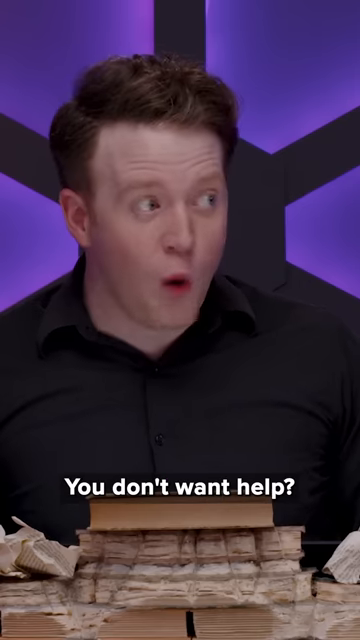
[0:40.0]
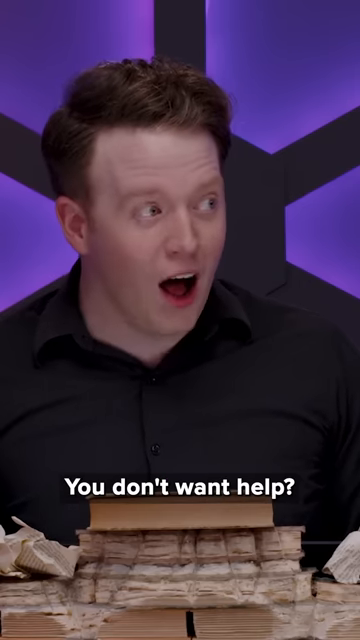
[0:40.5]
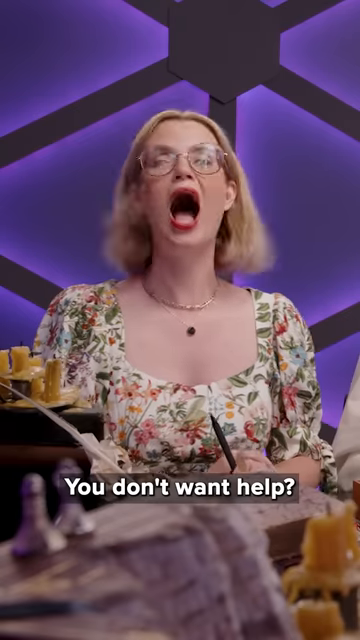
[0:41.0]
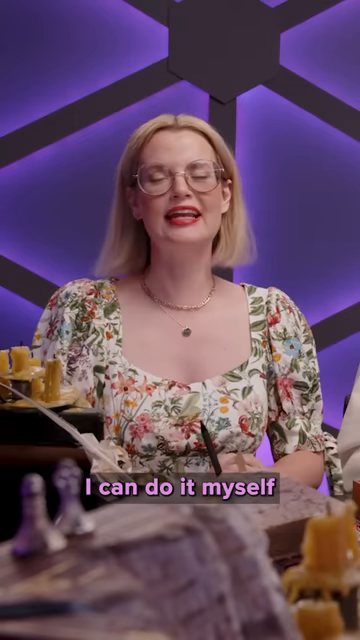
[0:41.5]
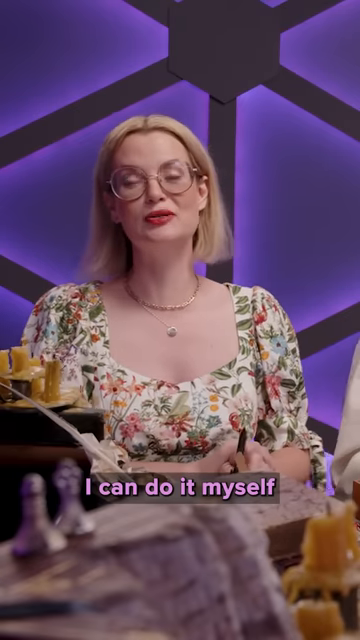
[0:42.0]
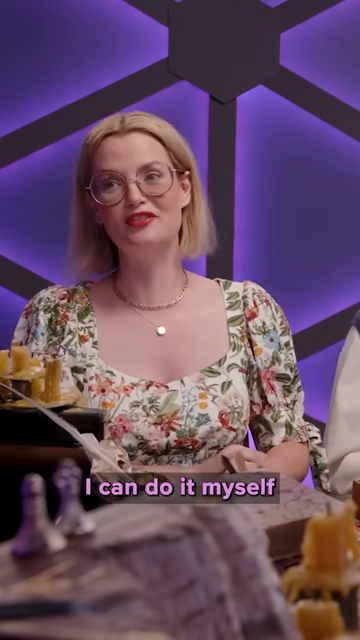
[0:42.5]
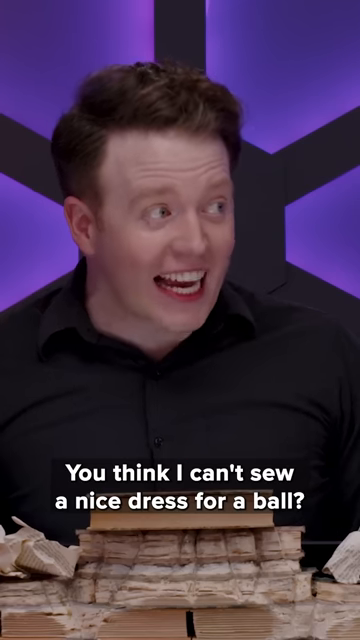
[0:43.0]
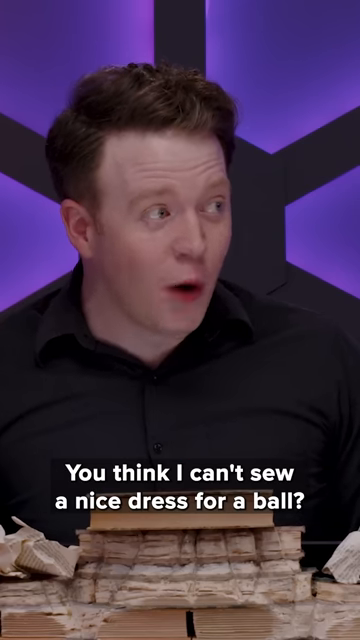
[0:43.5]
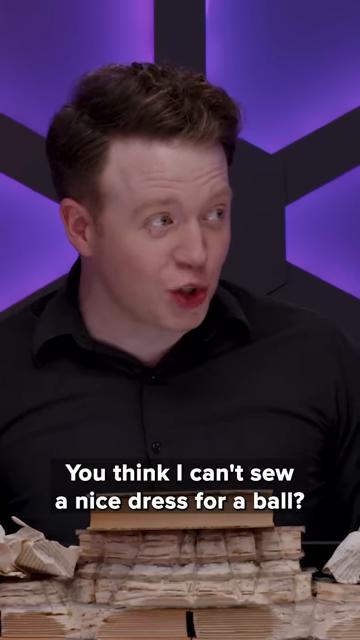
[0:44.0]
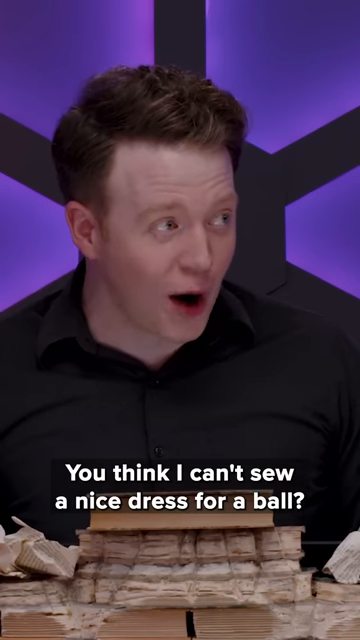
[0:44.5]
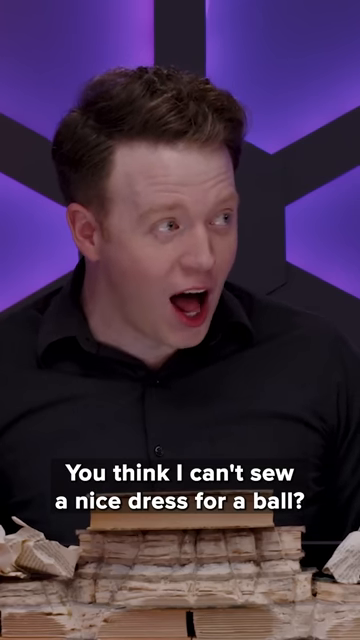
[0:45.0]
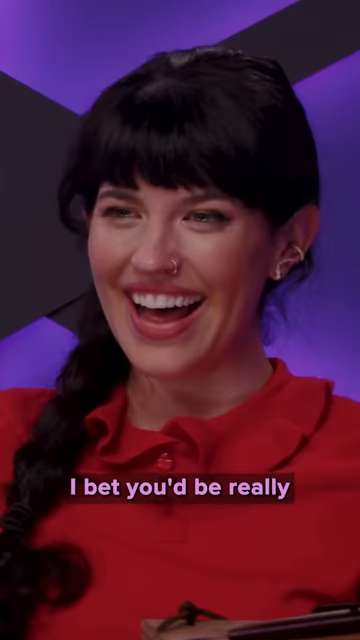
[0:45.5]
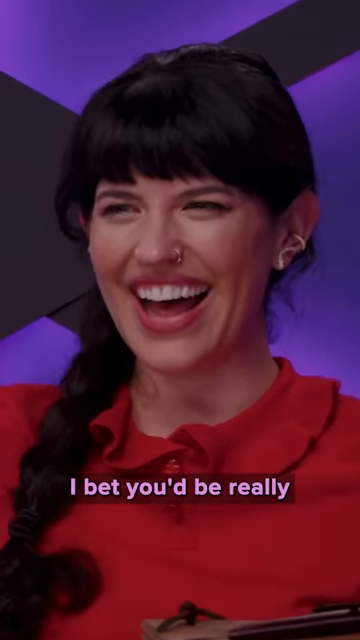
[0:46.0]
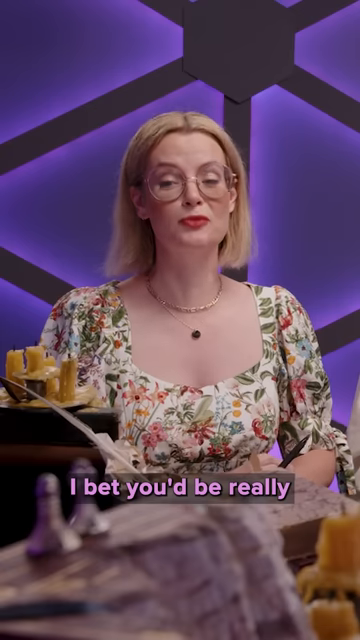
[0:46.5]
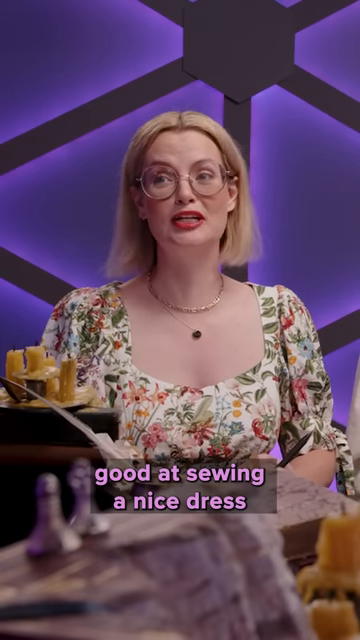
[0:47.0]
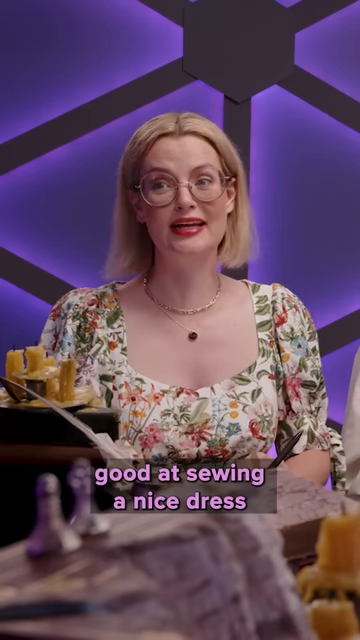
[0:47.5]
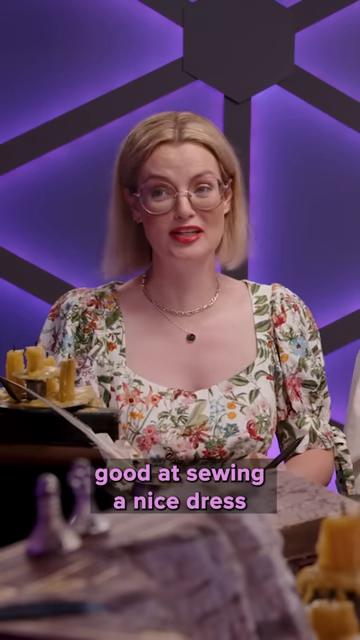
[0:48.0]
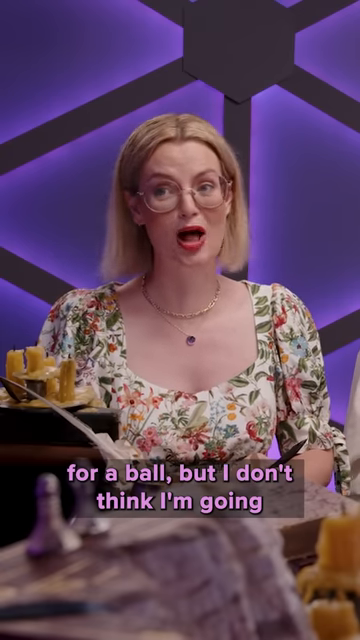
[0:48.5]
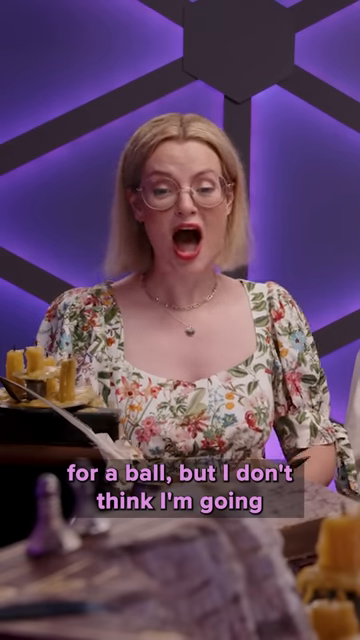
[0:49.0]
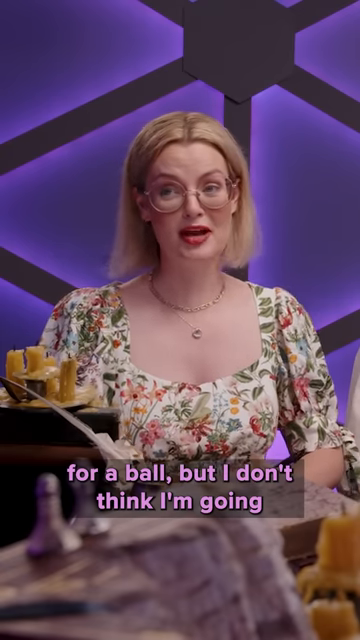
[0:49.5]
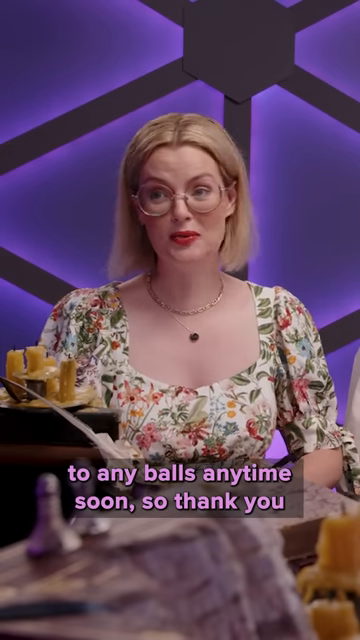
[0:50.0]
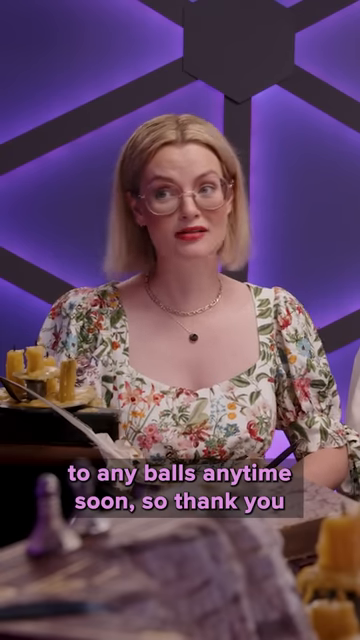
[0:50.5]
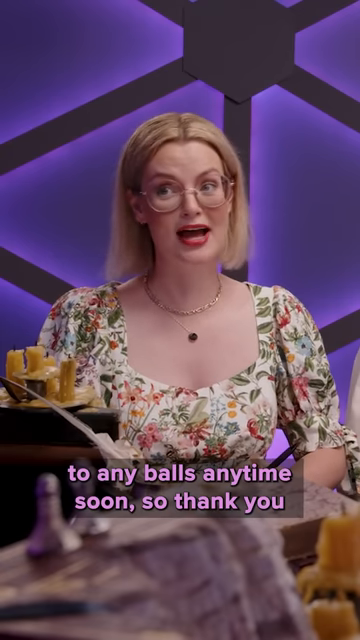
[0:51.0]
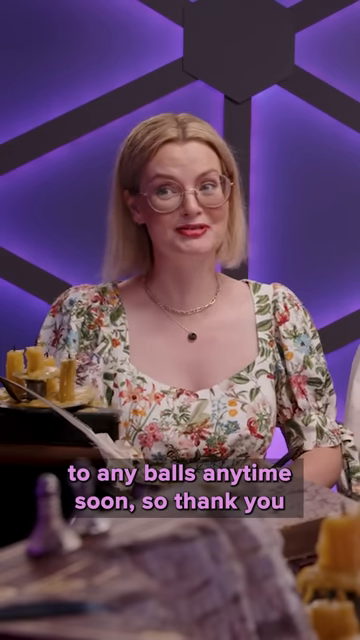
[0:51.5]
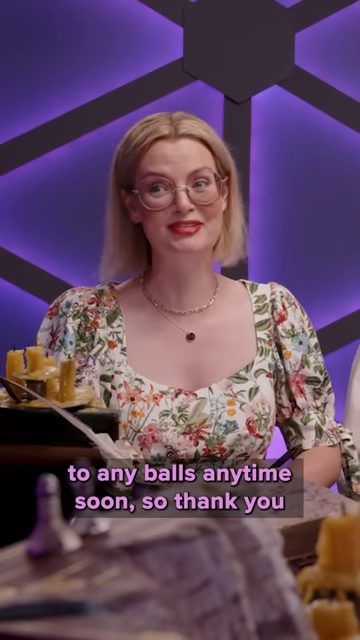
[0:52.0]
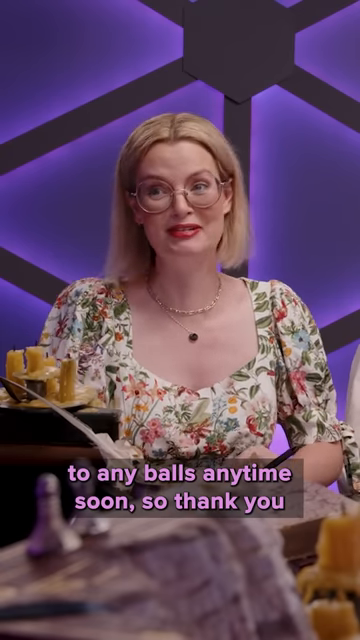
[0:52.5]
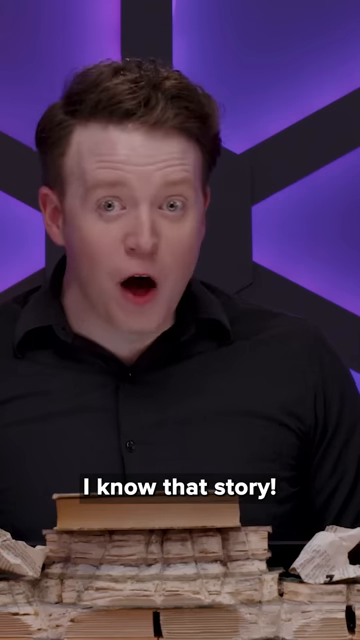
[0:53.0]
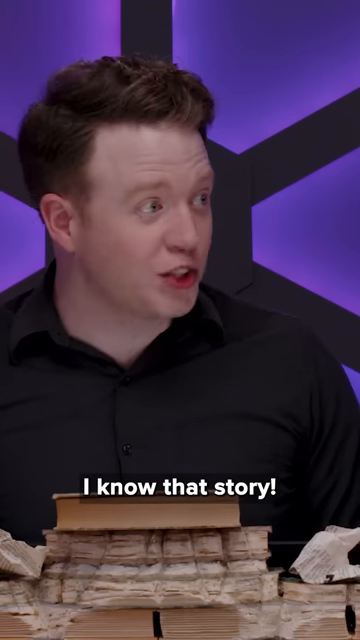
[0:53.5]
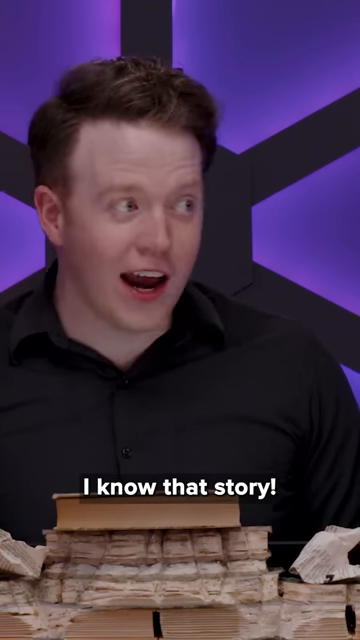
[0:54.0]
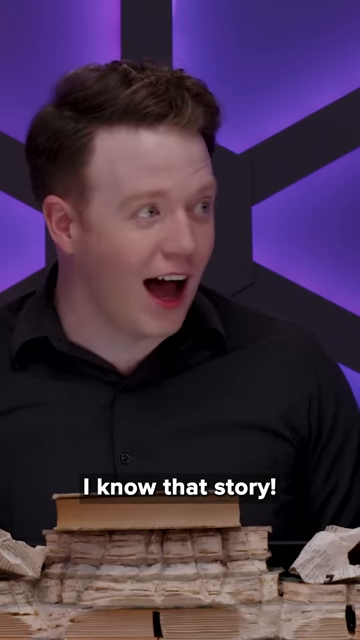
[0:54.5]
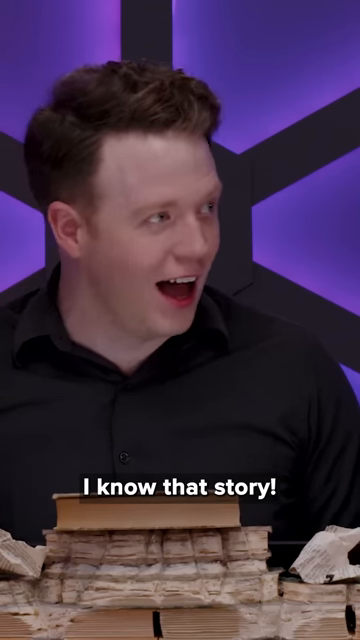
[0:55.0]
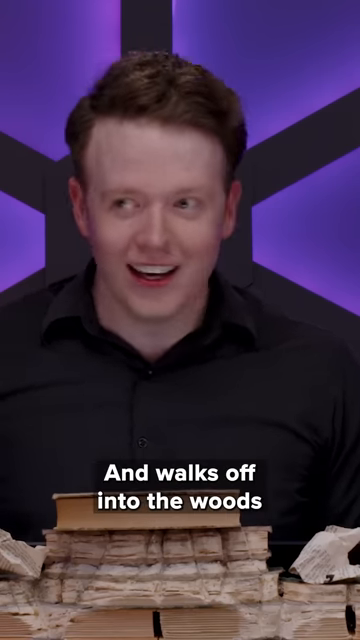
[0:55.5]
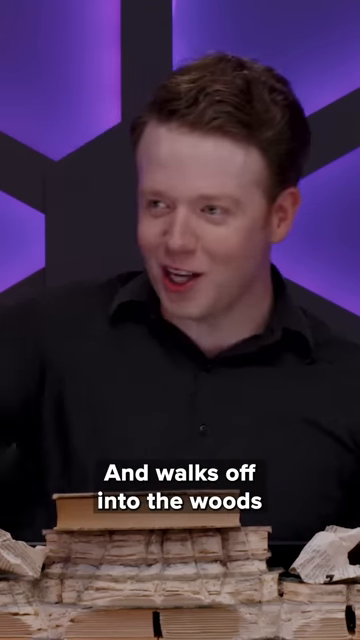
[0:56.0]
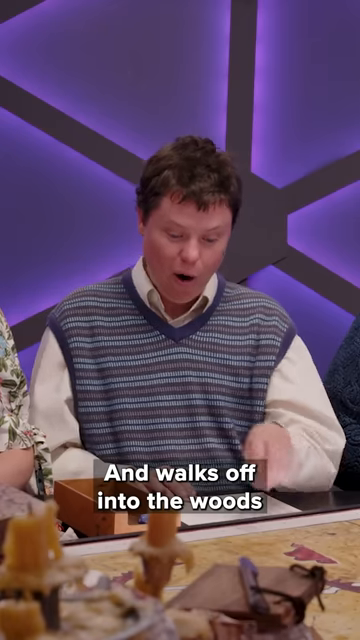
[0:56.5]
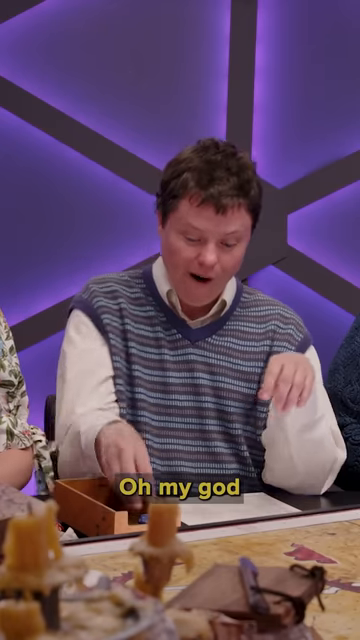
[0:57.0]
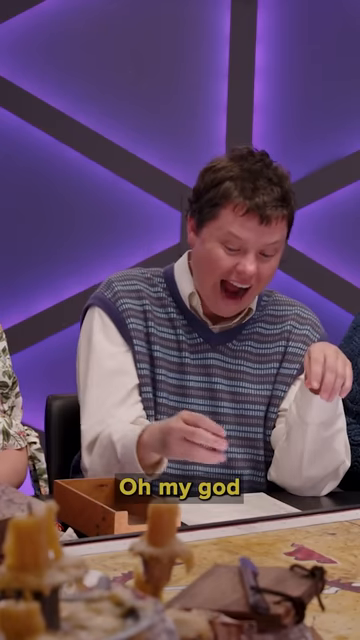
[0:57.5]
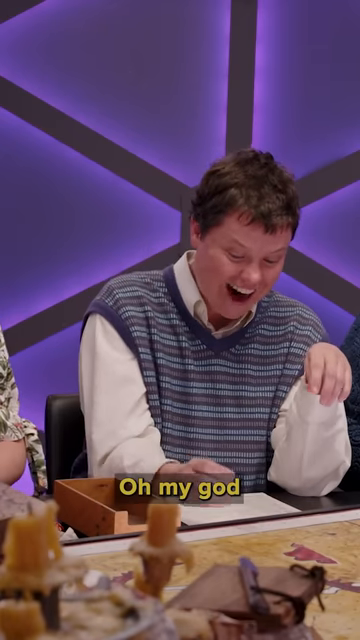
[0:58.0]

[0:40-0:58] A man with short brown hair looks toward someone and talks, with white text at the bottom reading "you don't want help." The scene changes to a woman with short blonde hair reaching the end of her neck, wearing a floral dress. She talks as purple text at the bottom reads "I can do it myself," slightly wobbling her head. Back on the man with short brown hair, he talks toward her, and white text reads "you think I can't sew a nice dress for a ball?" The scene changes to a woman with black hair in a braid down her shoulder, laughing, with purple text reading "I bet you'd be really." The blonde woman returns with text at the bottom reading "good at sewing a nice dress," talking while slightly moving her head. More purple text reads "for a ball, but I don't think I'm going to any balls anytime soon. So thank you." She keeps talking, moving her head and shoulders. The man with short brown hair looks over at someone and talks as white text at the bottom reads "I know that story." He shakes his head and puts his hands up while looking to his right. More white text reads "and walks off into the woods," and he moves his hand in front of him. The scene changes to a woman in a striped shirt with white long sleeves, looking down, mouth open, laughing, with yellow text at the bottom reading "Oh my God."